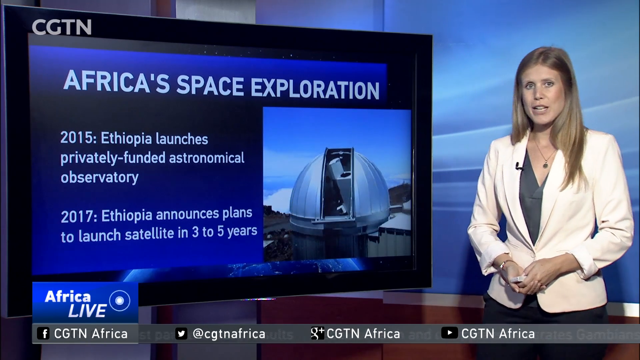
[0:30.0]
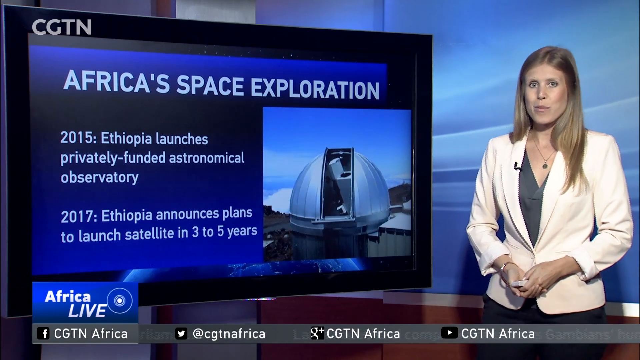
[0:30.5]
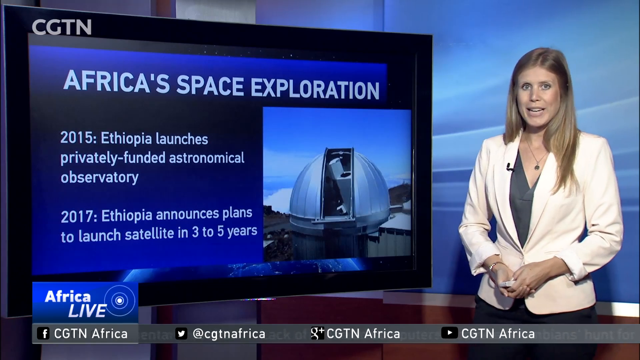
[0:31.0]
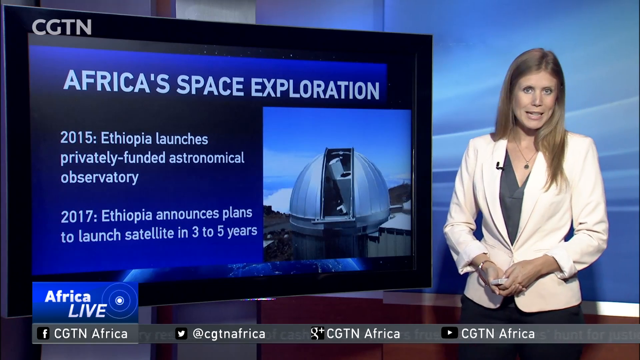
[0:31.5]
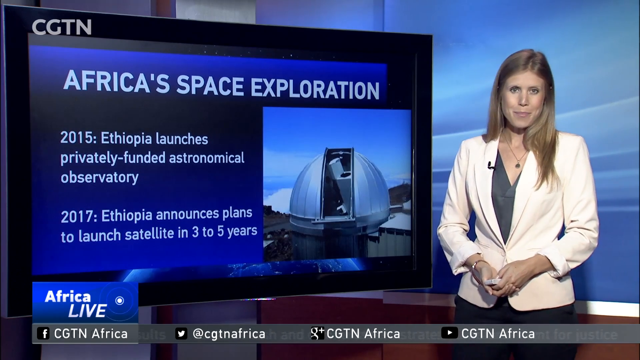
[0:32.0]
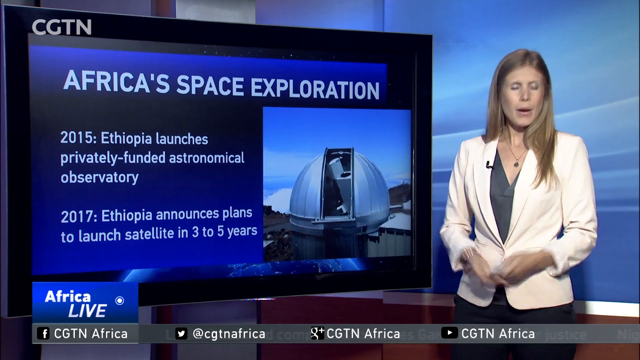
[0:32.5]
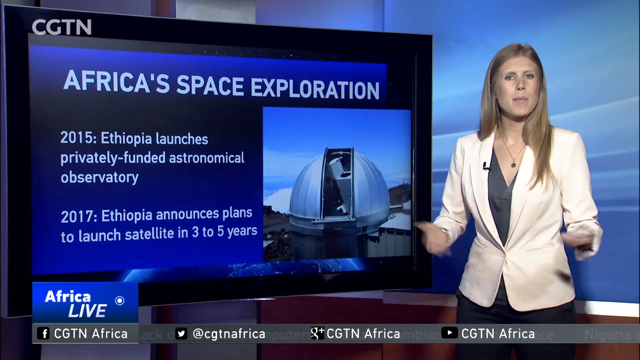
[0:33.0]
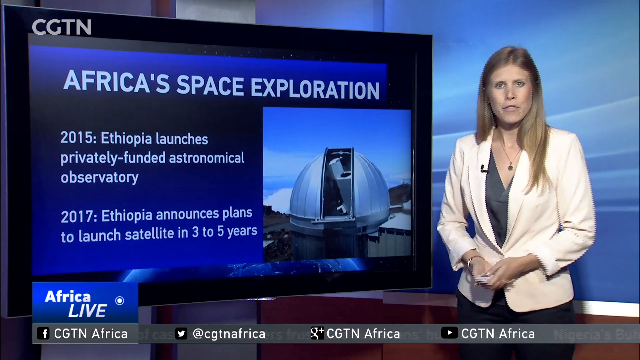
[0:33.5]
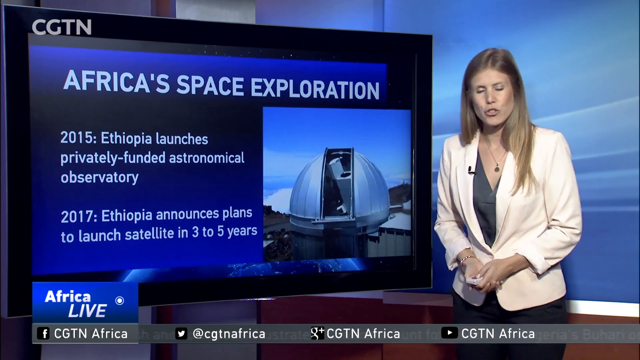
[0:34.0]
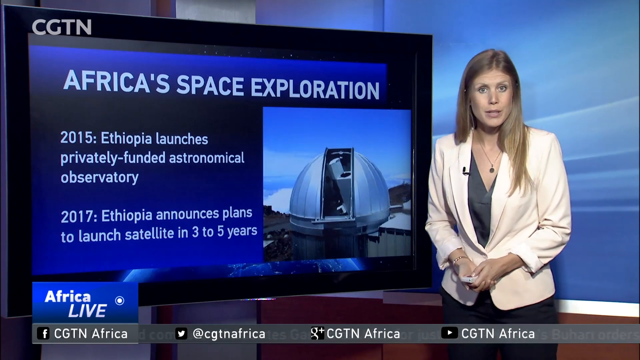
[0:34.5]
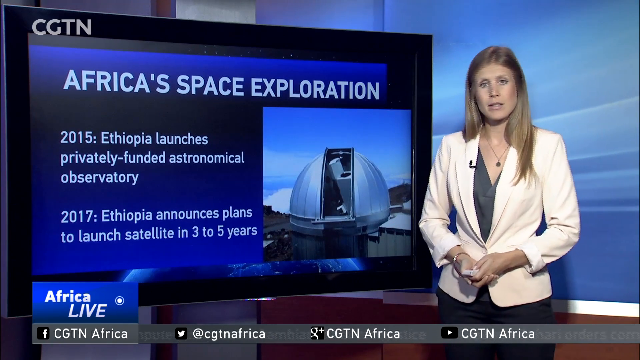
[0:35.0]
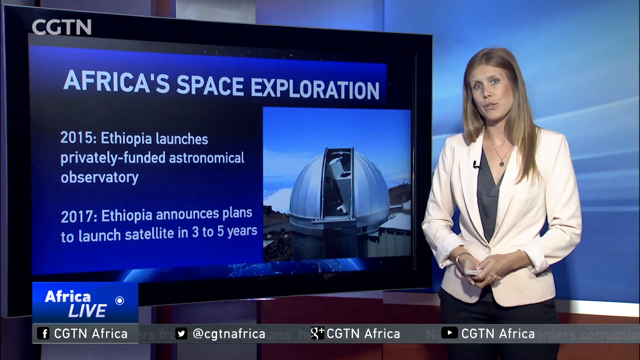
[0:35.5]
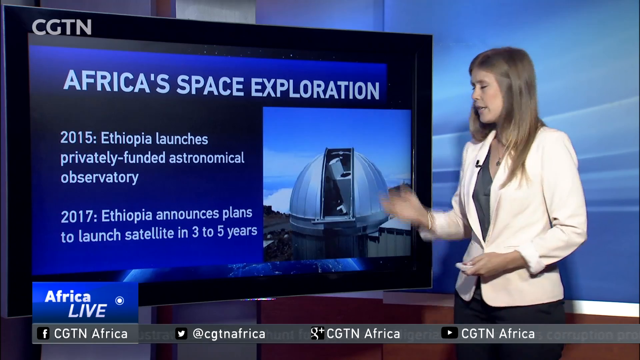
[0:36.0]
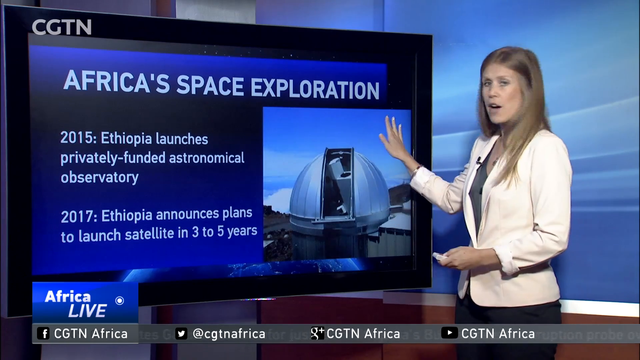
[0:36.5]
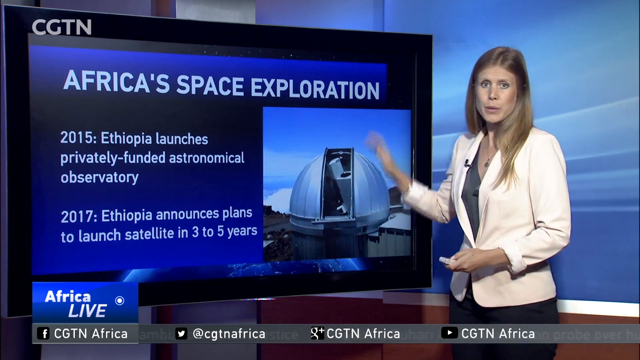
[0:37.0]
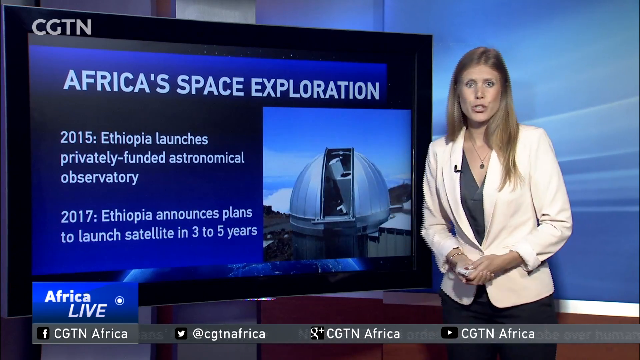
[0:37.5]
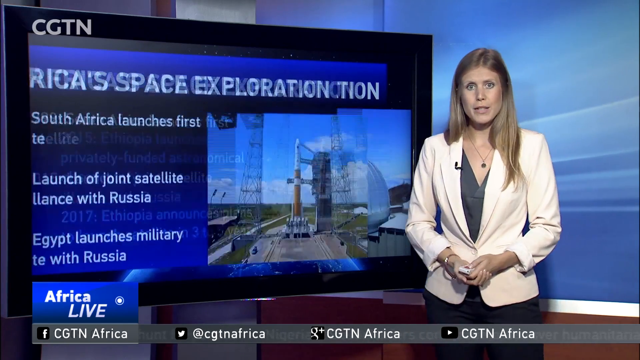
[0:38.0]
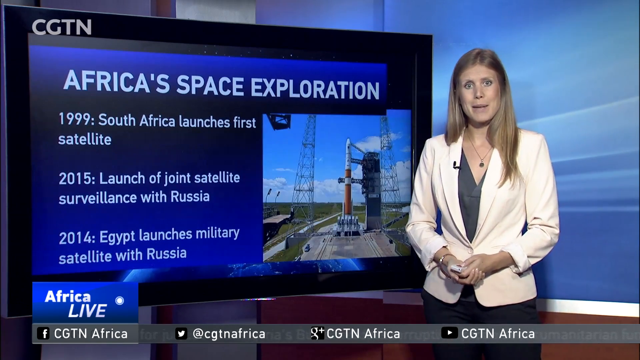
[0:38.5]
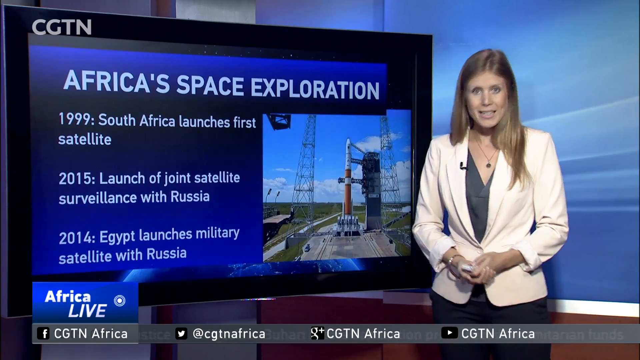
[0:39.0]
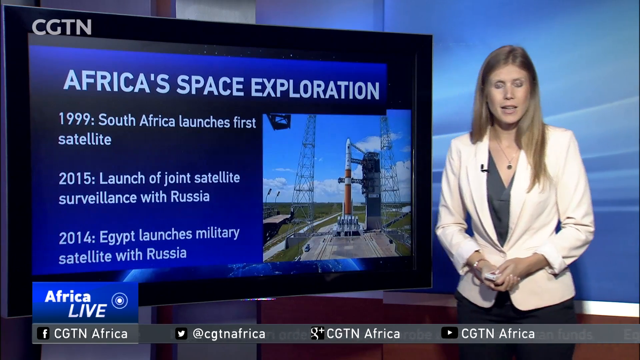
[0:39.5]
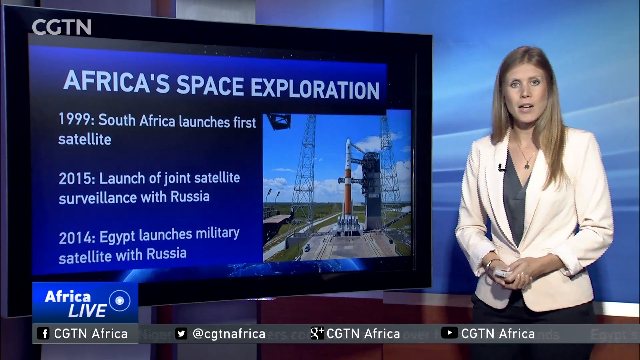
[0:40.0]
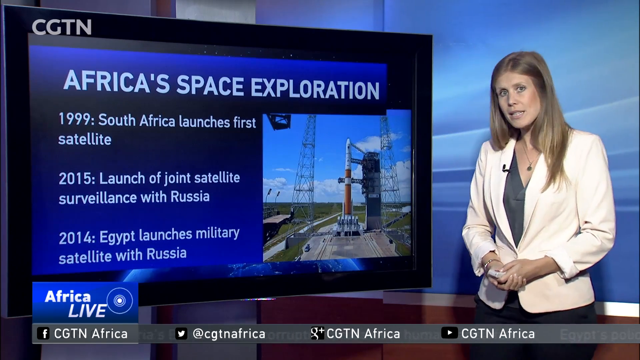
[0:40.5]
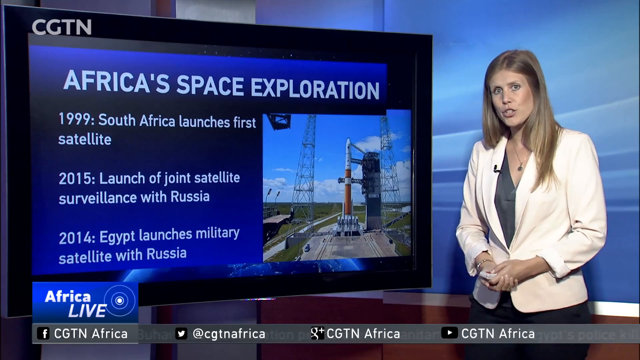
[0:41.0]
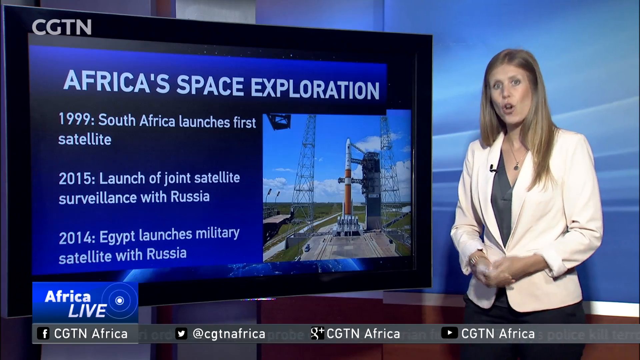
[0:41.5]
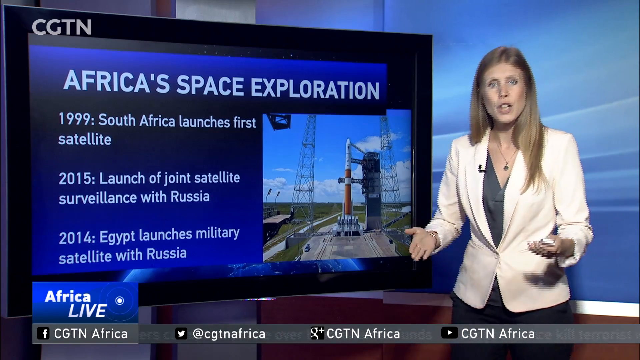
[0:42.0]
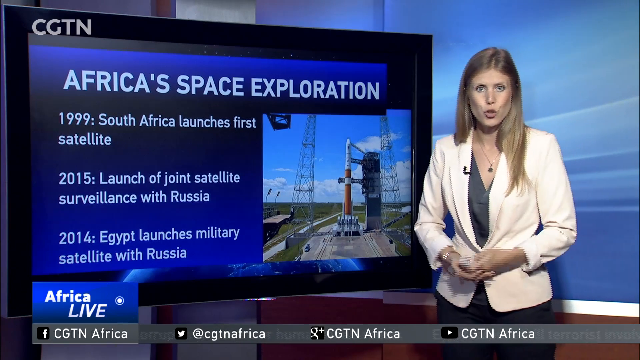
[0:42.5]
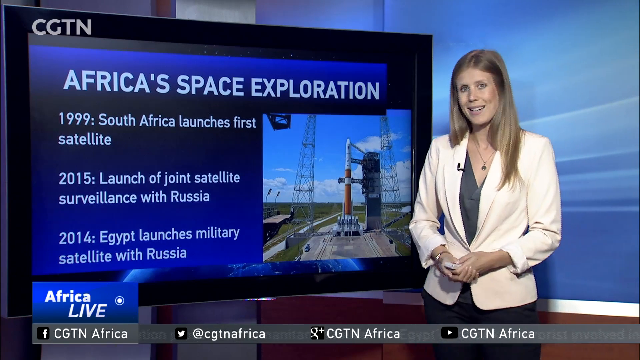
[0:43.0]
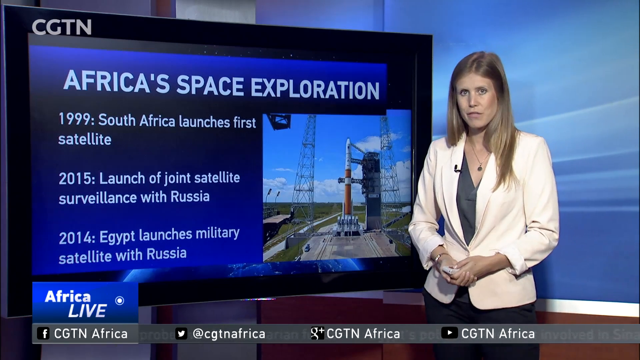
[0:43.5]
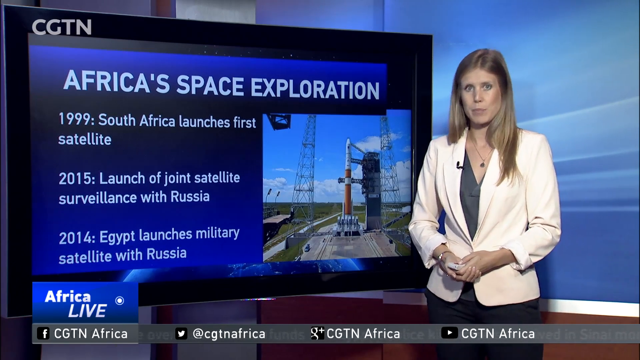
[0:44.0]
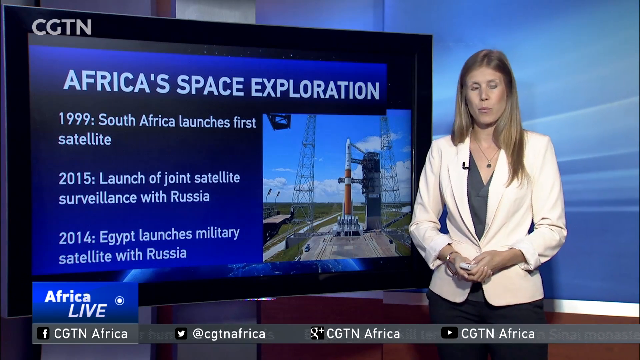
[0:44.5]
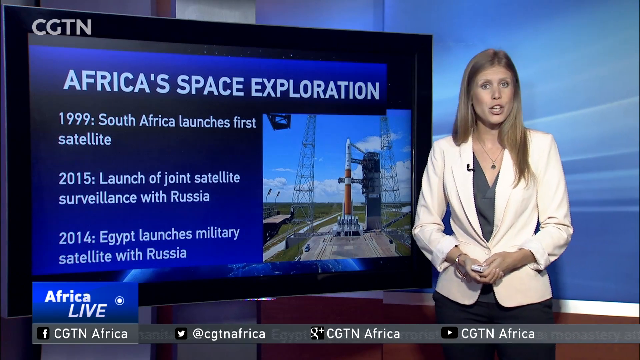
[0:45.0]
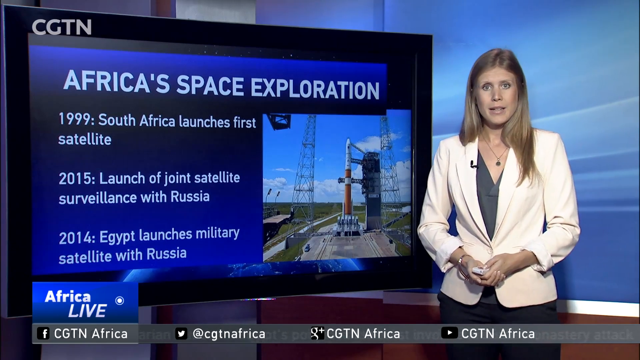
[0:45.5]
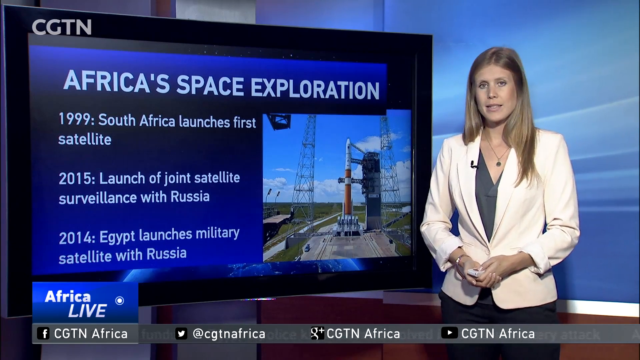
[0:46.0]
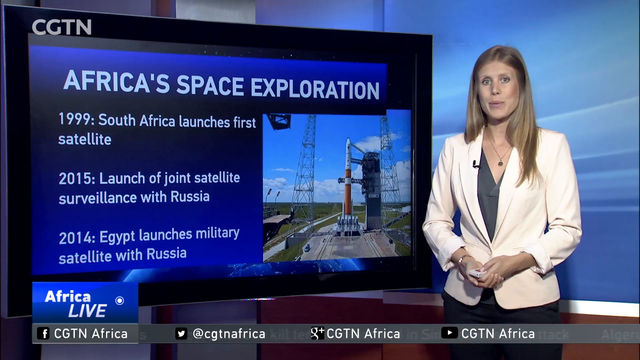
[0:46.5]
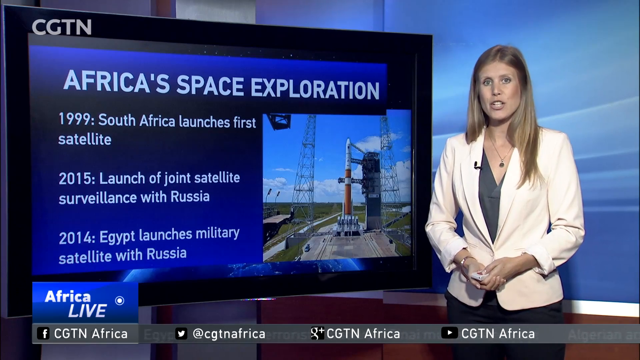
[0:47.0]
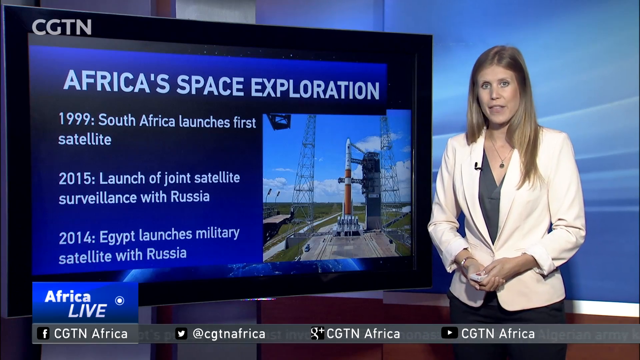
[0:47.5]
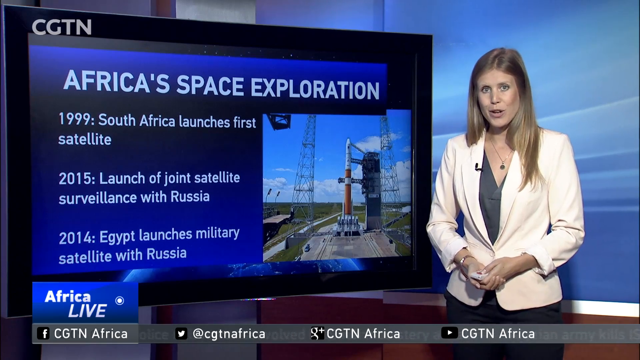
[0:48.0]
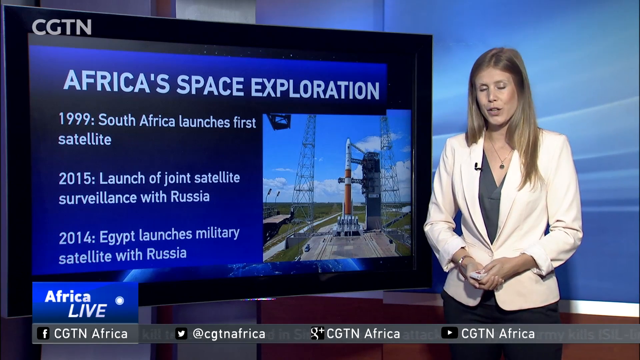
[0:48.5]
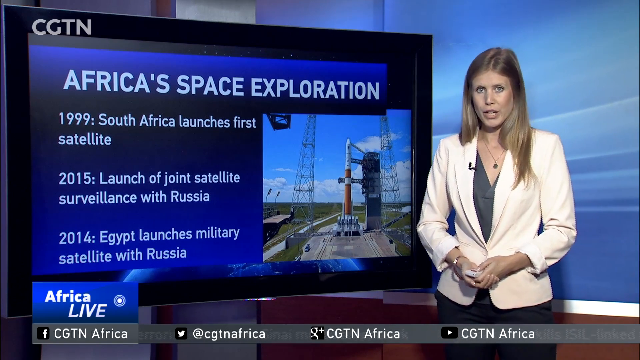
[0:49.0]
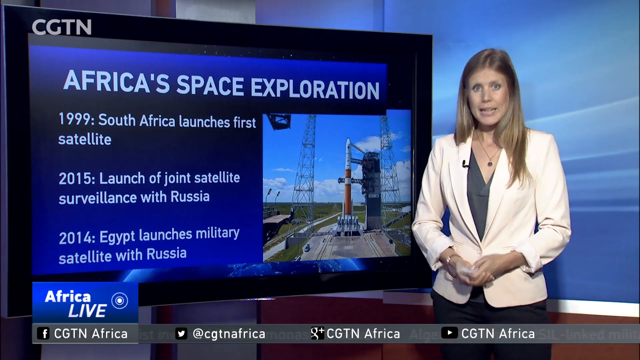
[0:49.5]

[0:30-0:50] The anchorwoman continues beside an image of the TV screen. A picture on the right appears to show equipment that African nations use to explore space, and below it are individual countries and their successes: "in 2015, Ethiopia launched a privately funded astronomical observatory, the first of its kind" and "in 2017, Ethiopia announced plans to launch a satellite in 3 to 5 years." As she broadcasts, she waves her arms, talks, points her hand at the screen, and reads the text along with it.